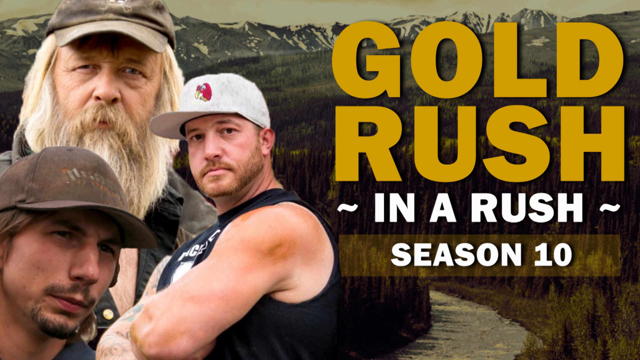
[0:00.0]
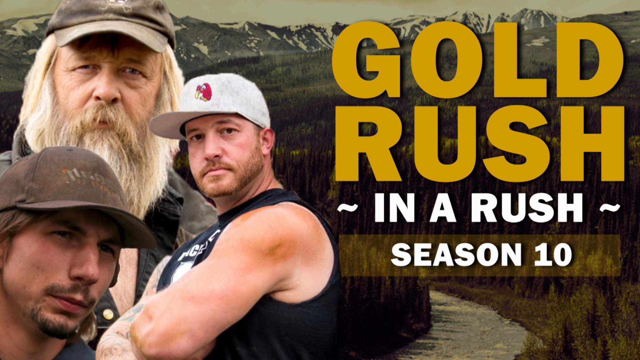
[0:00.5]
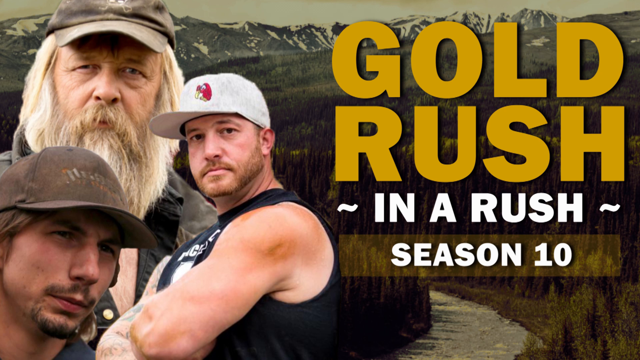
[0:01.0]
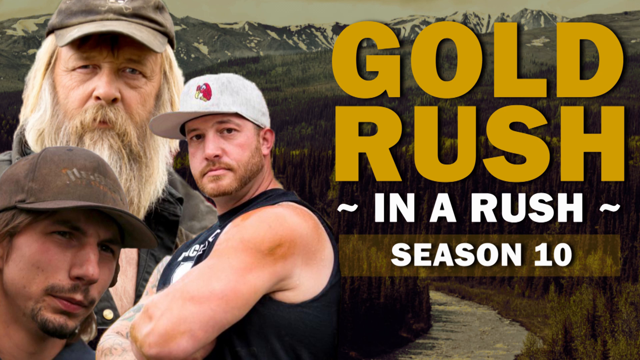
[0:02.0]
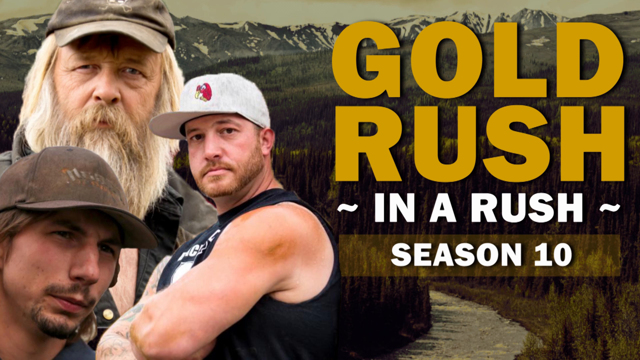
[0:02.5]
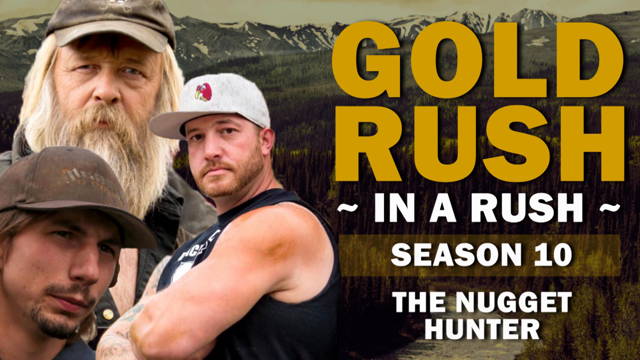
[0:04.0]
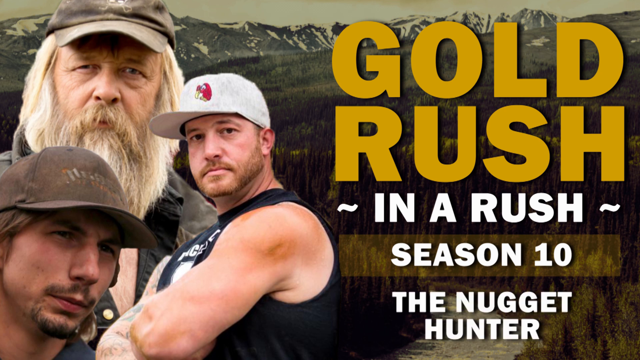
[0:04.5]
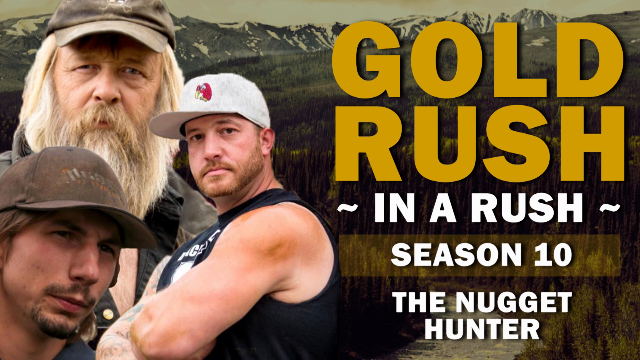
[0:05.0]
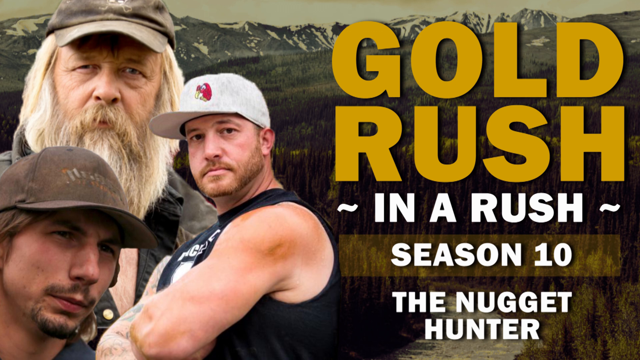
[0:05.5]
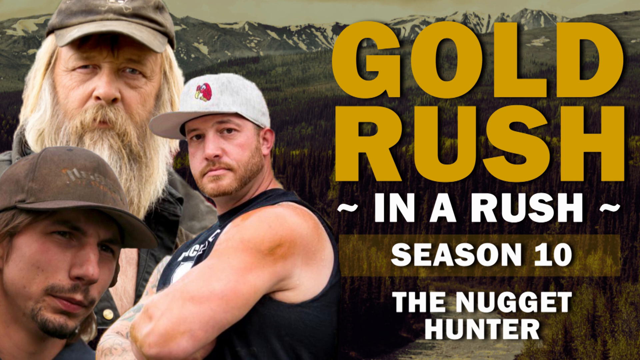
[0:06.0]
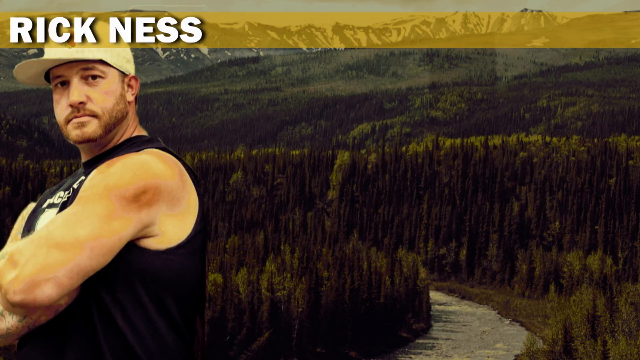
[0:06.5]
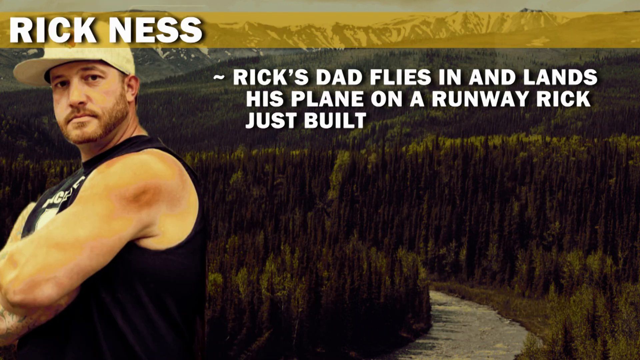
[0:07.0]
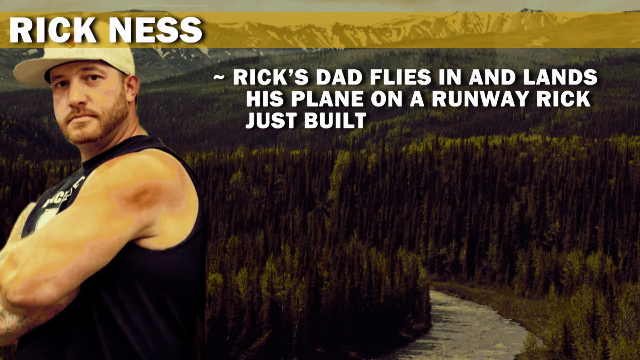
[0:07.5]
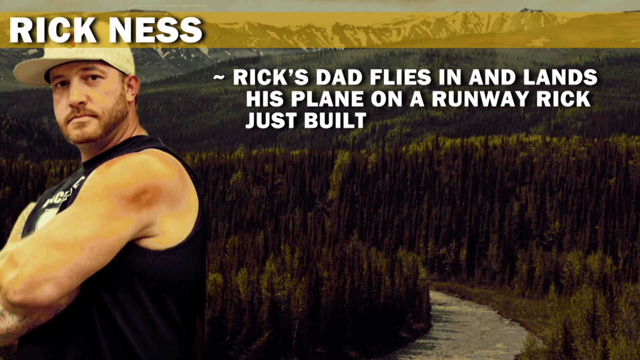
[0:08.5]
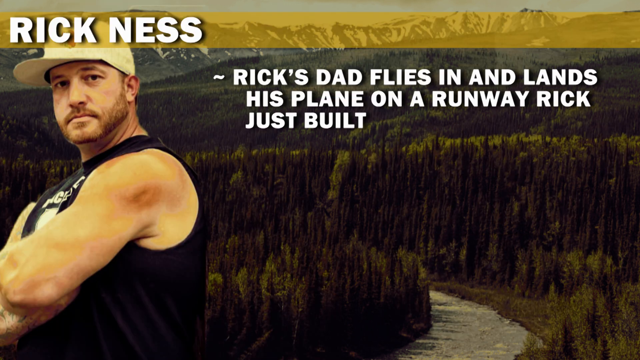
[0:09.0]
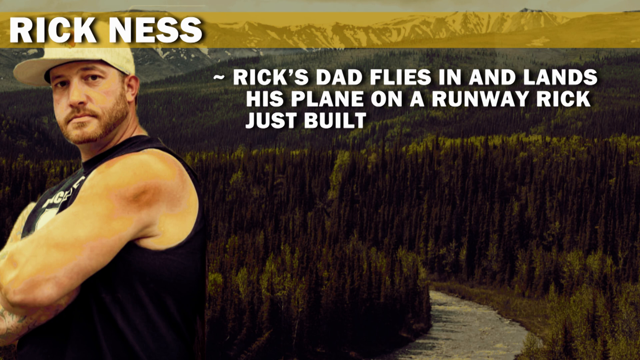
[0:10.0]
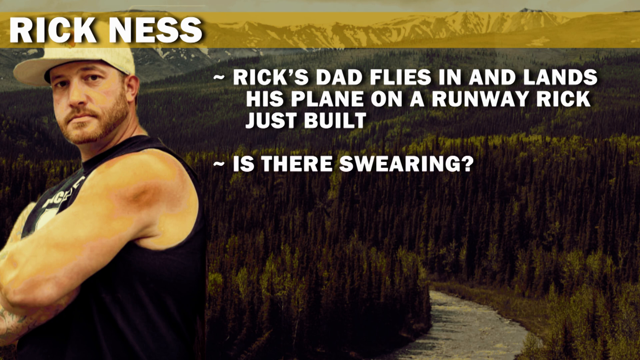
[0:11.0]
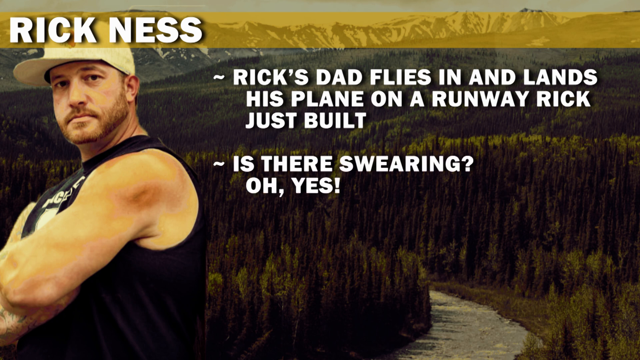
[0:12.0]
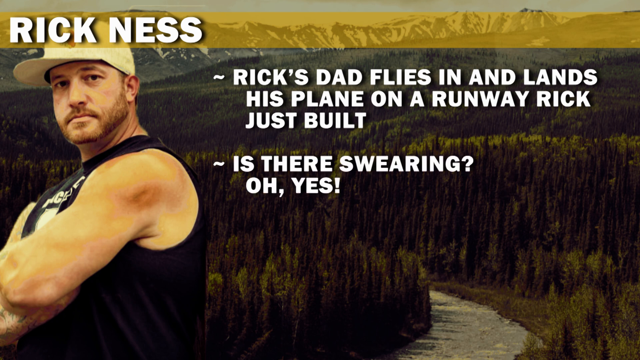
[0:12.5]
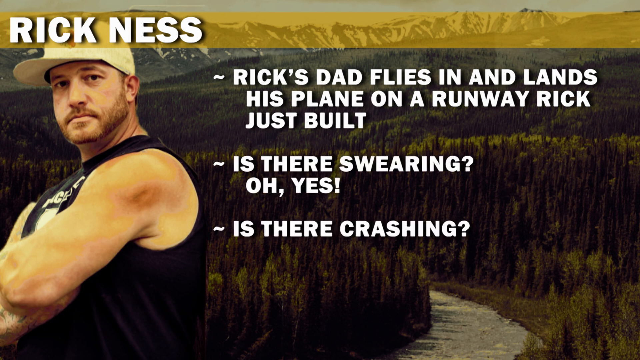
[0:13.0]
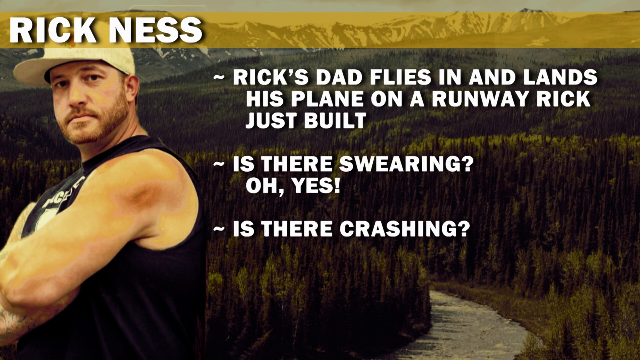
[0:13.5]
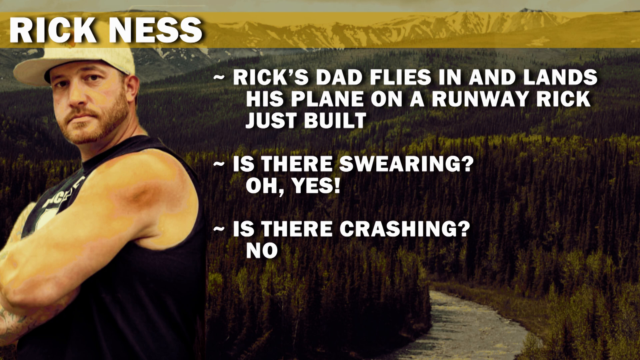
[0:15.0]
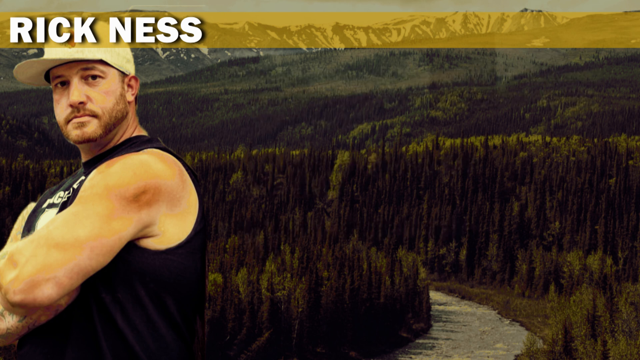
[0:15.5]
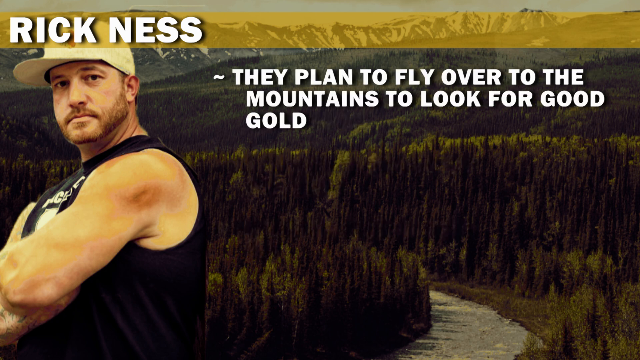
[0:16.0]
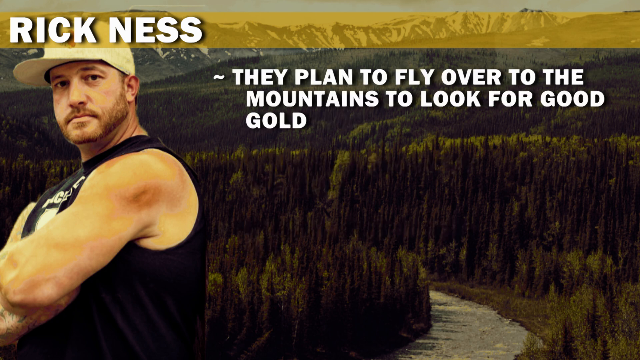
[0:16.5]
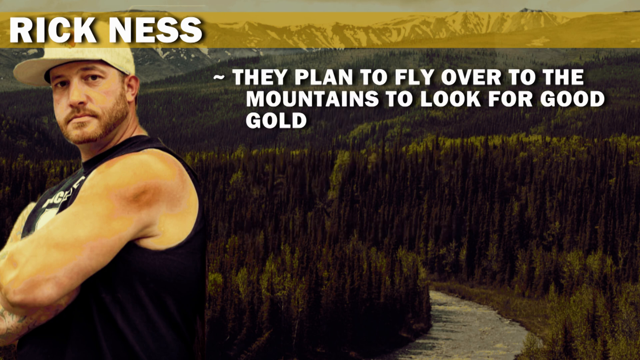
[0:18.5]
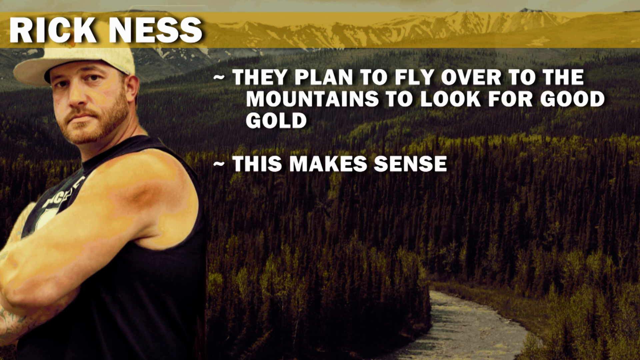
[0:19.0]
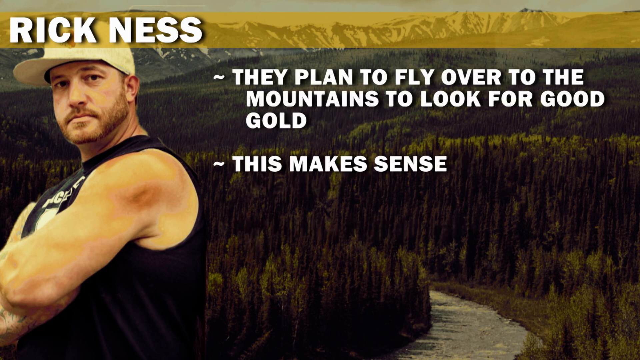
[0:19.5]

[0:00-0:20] A slide shows a background of what is kind of lots of wilderness, with snowy mountains in the distance and a winding path. In front of this, on the right-hand side, the words "GOLD" and underneath "RUSH" appear in capital gold letters. Beneath them, in white capital letters, is "IN A RUSH", with two squiggly lines on either side, and below that, in a slightly highlighted text box, is "SEASON 10". On the left-hand side is a little collage-like set of images of three men, all wearing caps, one with a big long beard. More words then arrive under "SEASON 10", reading "The Nugget Hunter". The slide changes: one of the men's images moves to the left-hand side and his name appears above him in white capital letters, "Rick Ness". To the right of him, a bullet point in white text reads "Rick's dad flies in and lands his plane on a runway Rick has just built." Another bullet point appears beneath it reading "is there swearing?", followed by "oh, yes." Then another bullet point appears reading "is there crashing?", followed by the word "no". All of the text disappears, and a new bullet point appears at the top reading "they plan to fly over to the mountains to look for good gold." Beneath it another bullet point appears reading "this makes sense."